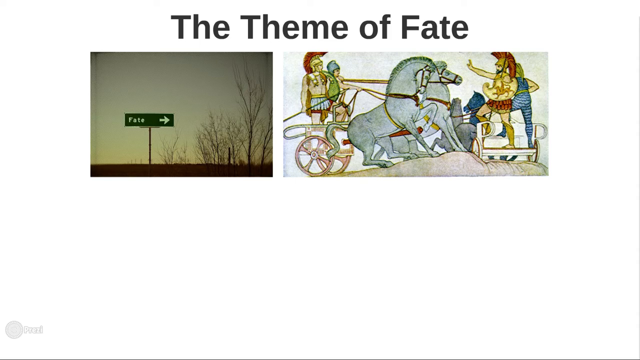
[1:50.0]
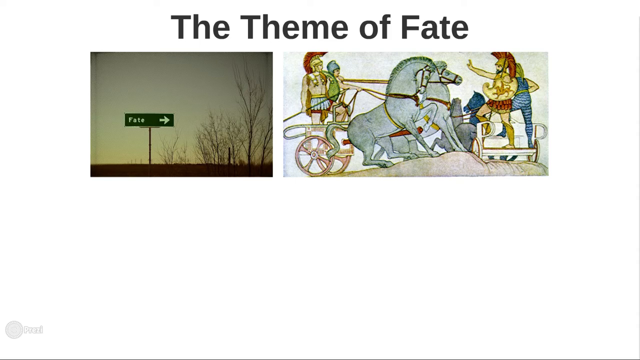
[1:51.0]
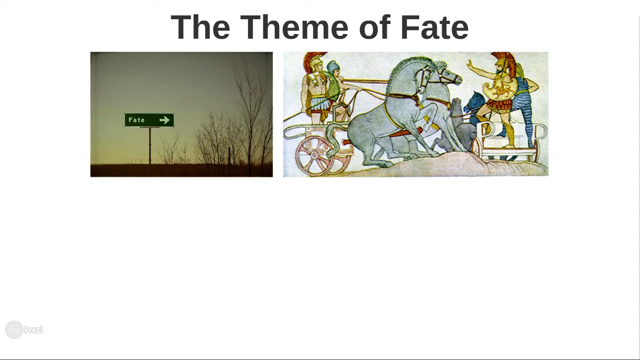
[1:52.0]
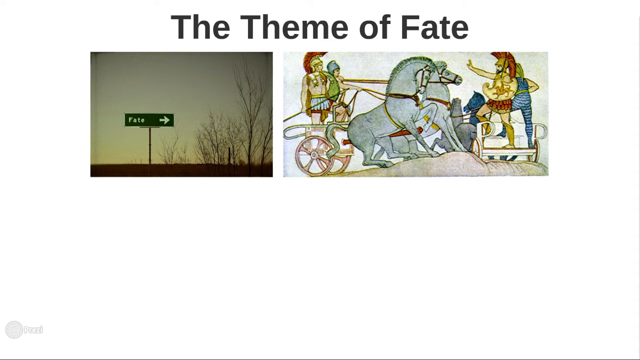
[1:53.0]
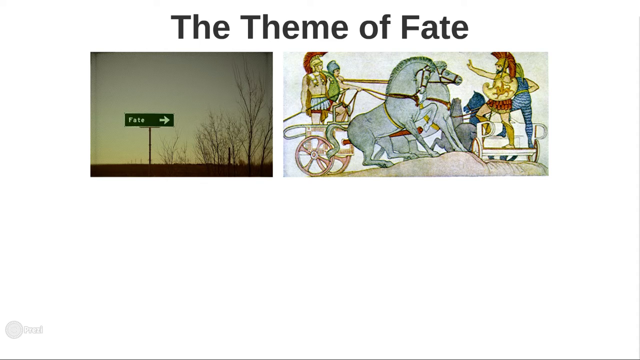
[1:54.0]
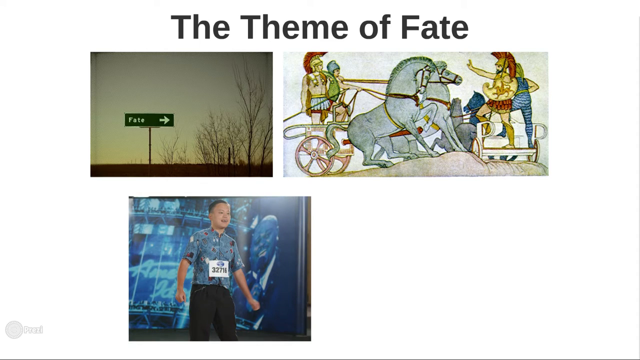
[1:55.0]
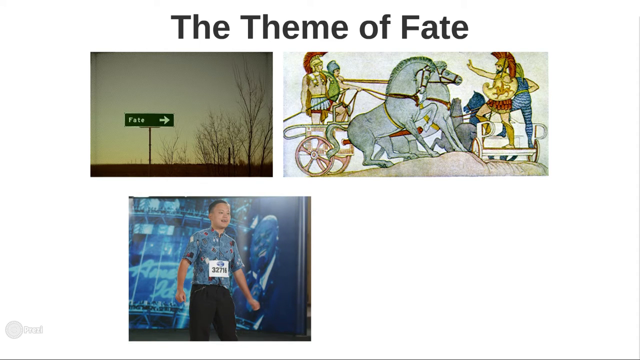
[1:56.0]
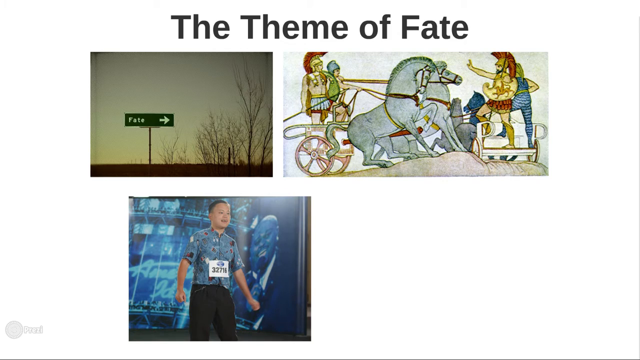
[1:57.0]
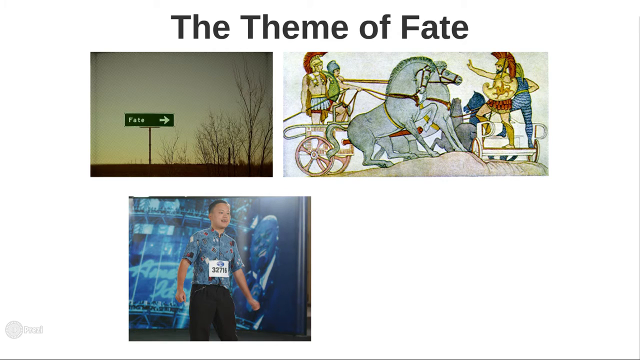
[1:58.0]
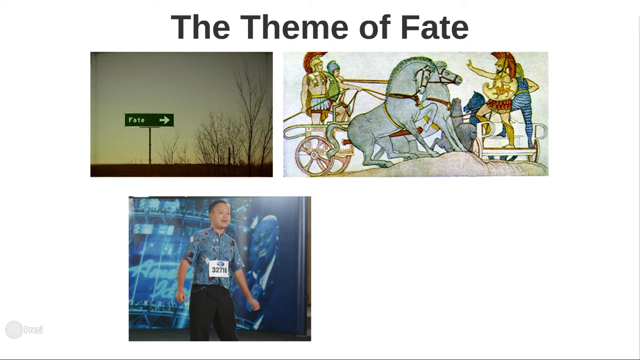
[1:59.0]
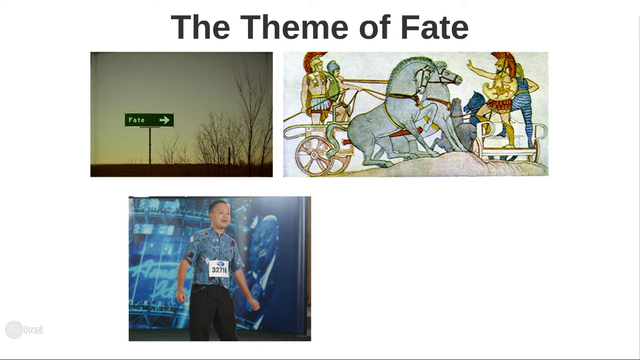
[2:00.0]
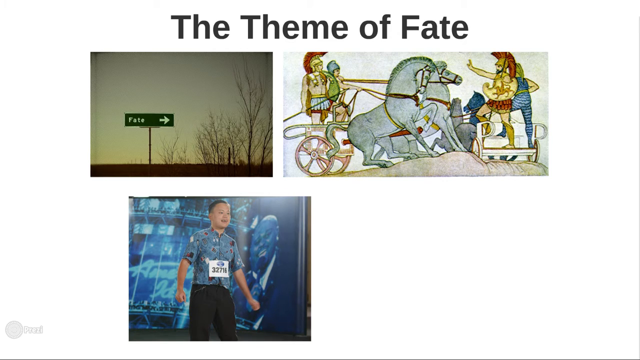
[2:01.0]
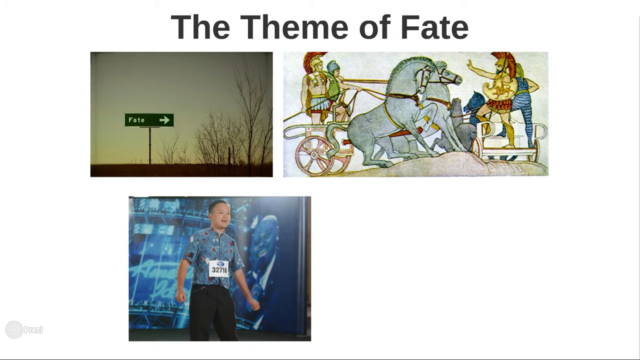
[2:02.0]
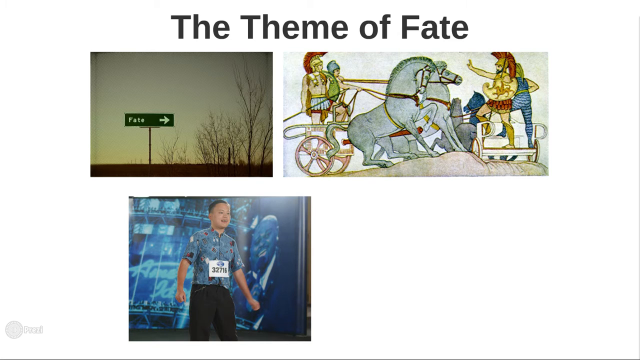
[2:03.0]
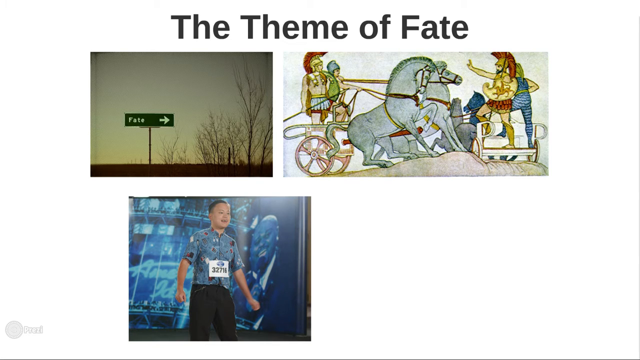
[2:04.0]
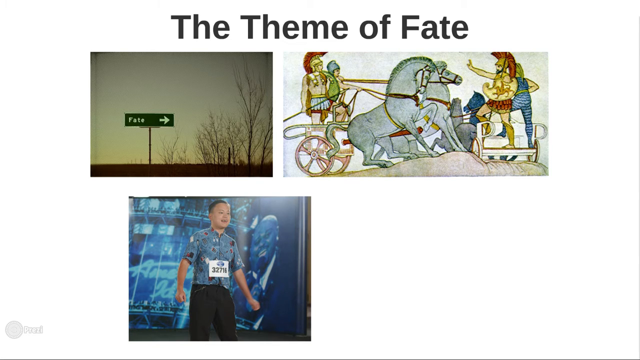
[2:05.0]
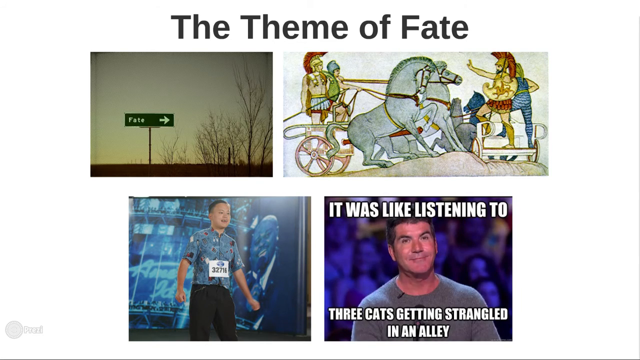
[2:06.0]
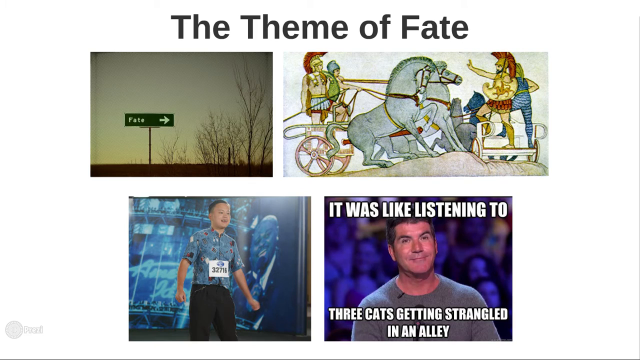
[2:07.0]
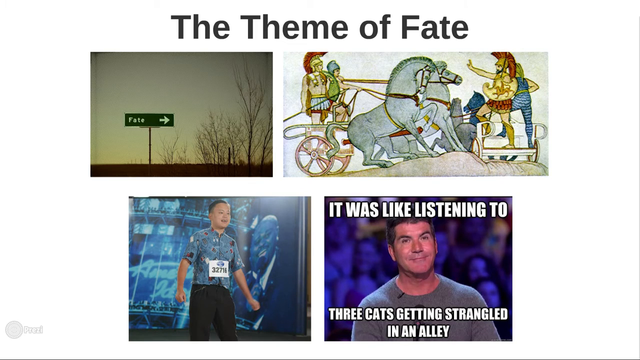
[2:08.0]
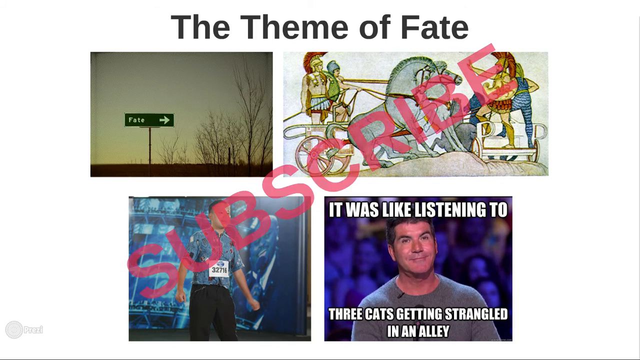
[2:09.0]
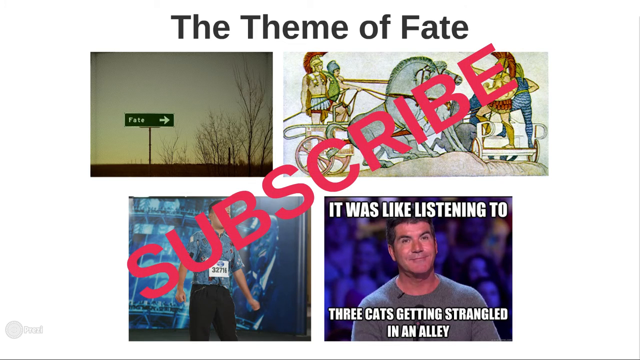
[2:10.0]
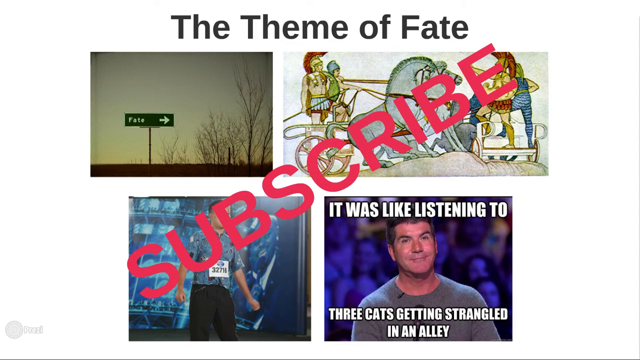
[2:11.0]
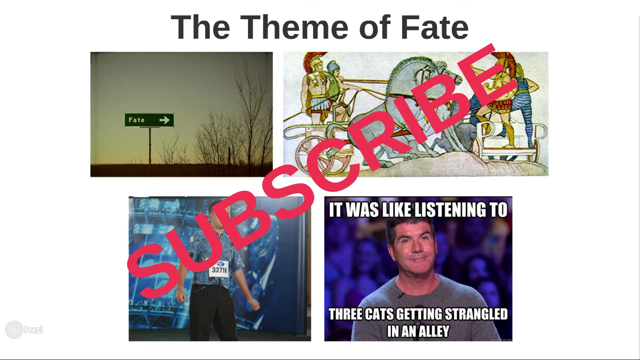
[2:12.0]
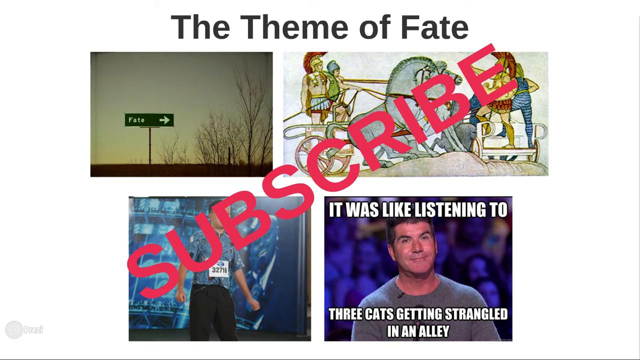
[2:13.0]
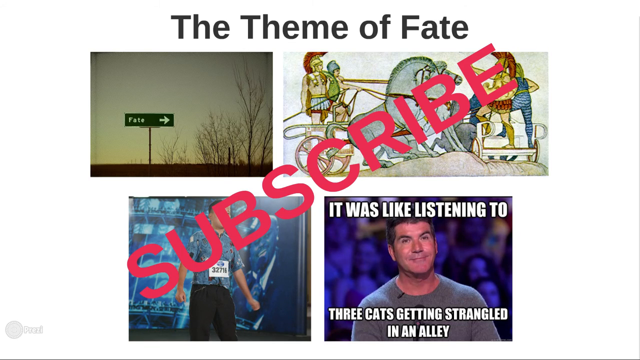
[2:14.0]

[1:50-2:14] The screen is predominantly white with some gray and black shading at the bottom. A title in dark gray or black reads "the theme of fate". Immediately below are two pictures. The left one seems to be a modern-day picture of possibly a city or country area in wintertime, with leafless trees and a green rectangular sign reading "FATE" in white, with a green arrow pointing to the right. The right picture shows a scene of two generals: one is in a carriage with an assistant, driving two horses and pulling them back forcefully, while another general stands in front of the horses with his hands up as if halting him; beside him is someone in a blue outfit. Another picture appears below, a modern-day scene of someone on American Idol with a number on his chest, who appears to be of Asian descent. A fourth picture box appears showing a man called Simon, with text saying "it was like listening to three cats getting strangled in an alley". Then a big pink "SUBSCRIBE" in all capital letters comes up turned sideways, angled across two of the pictures.